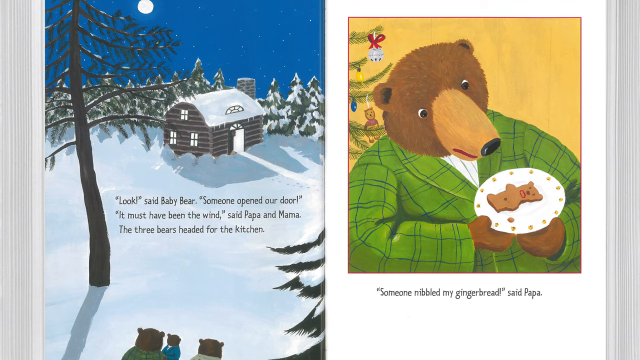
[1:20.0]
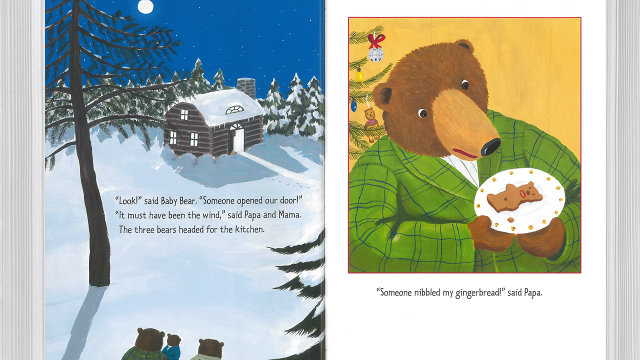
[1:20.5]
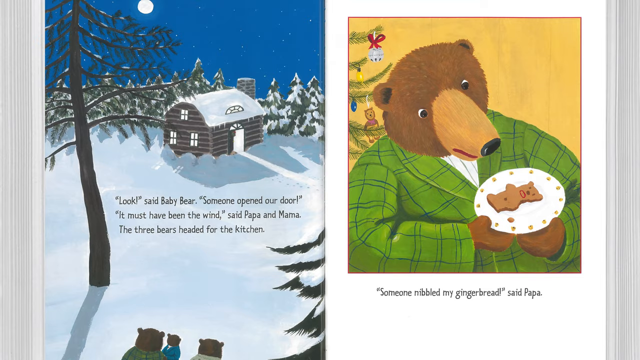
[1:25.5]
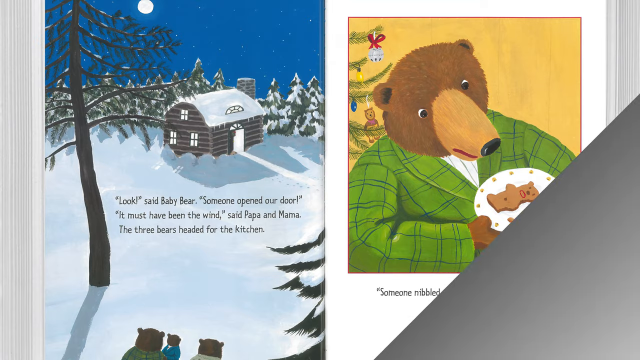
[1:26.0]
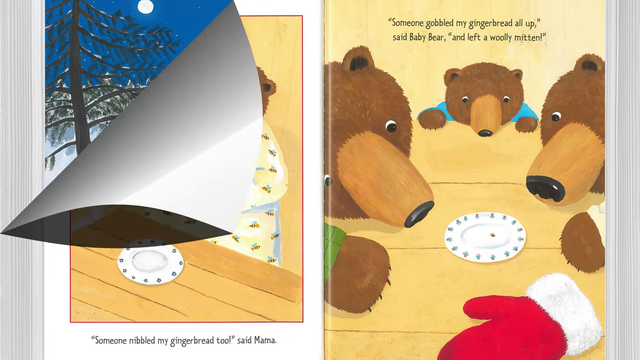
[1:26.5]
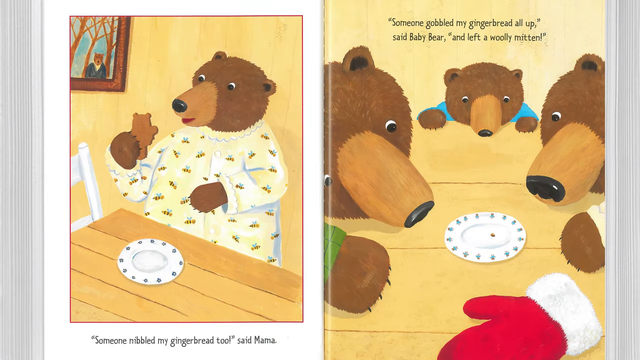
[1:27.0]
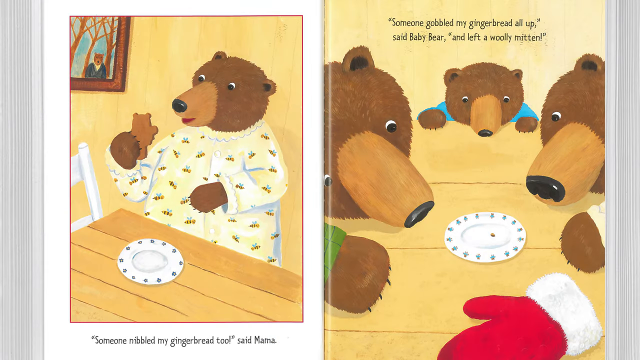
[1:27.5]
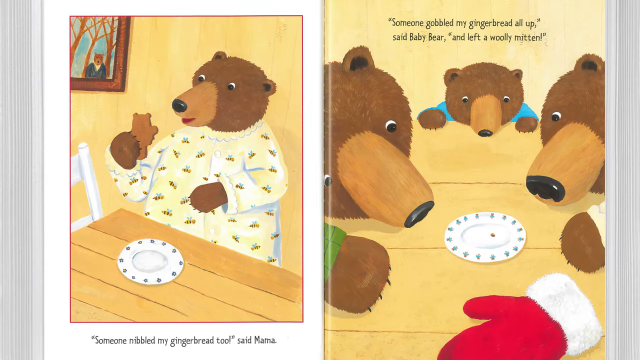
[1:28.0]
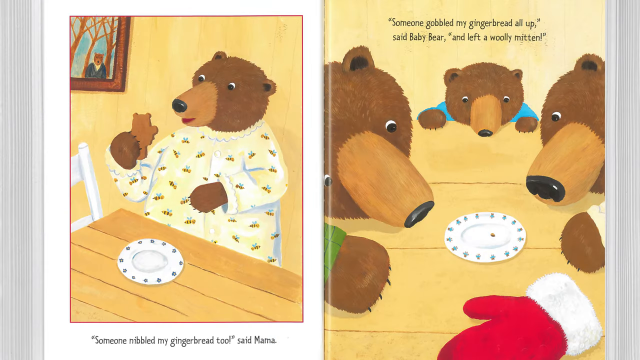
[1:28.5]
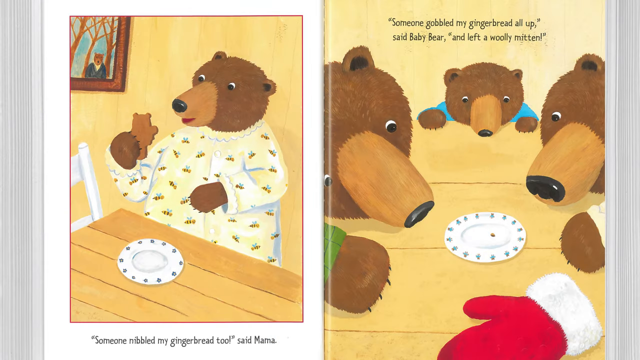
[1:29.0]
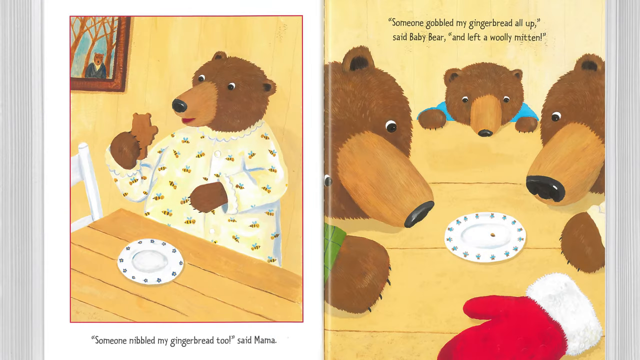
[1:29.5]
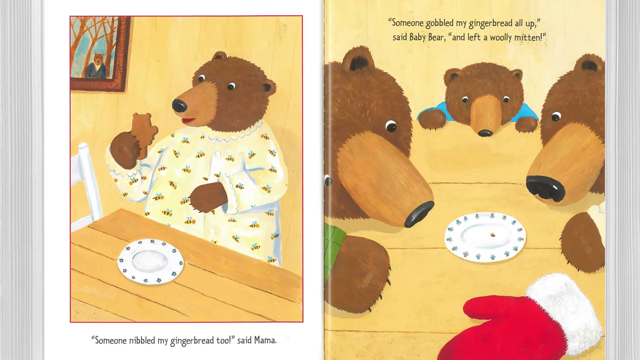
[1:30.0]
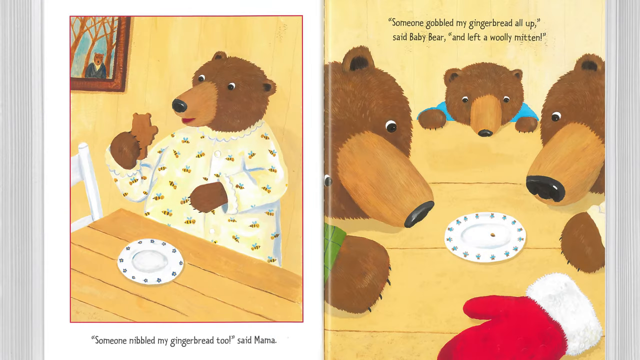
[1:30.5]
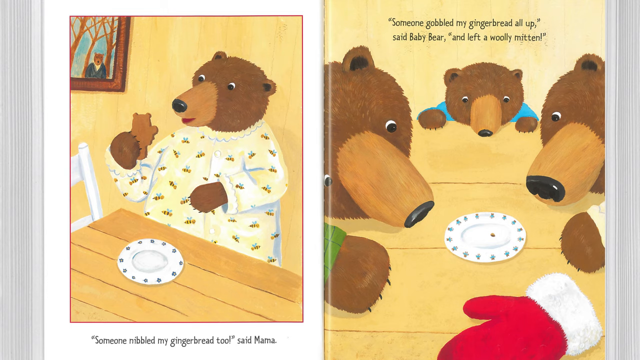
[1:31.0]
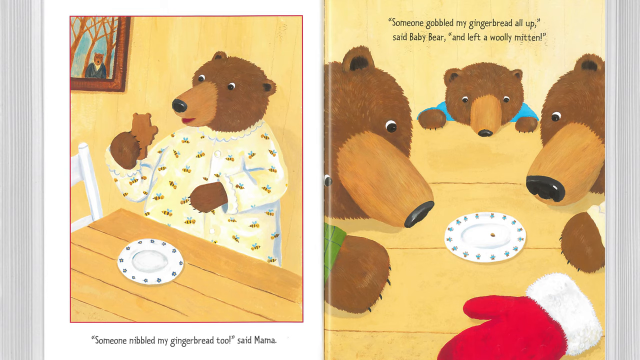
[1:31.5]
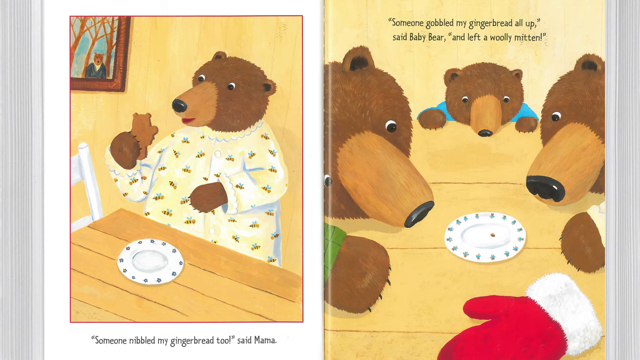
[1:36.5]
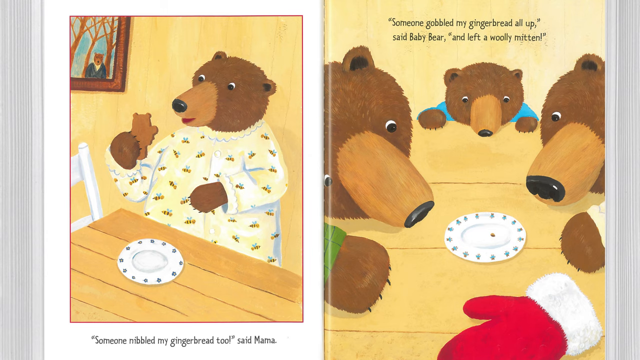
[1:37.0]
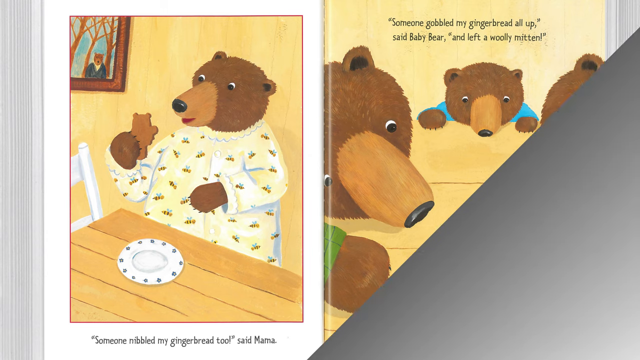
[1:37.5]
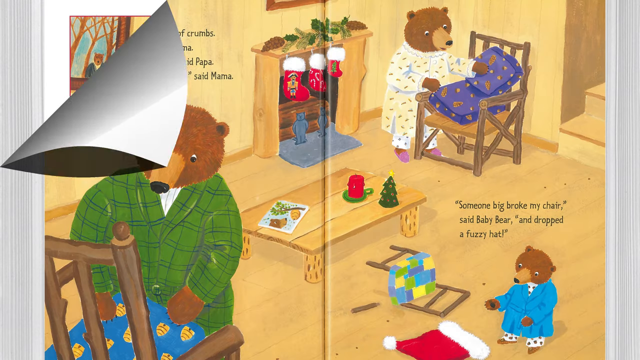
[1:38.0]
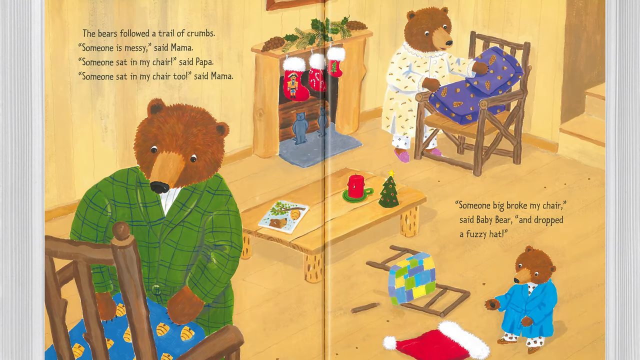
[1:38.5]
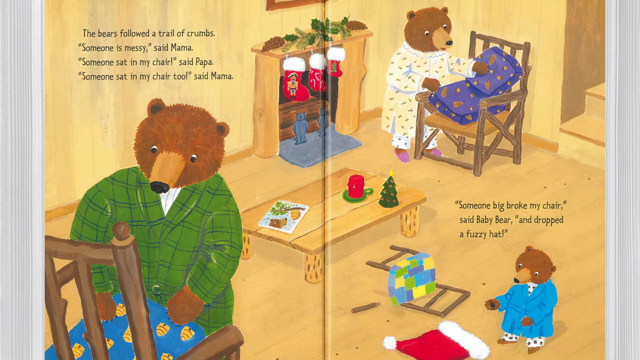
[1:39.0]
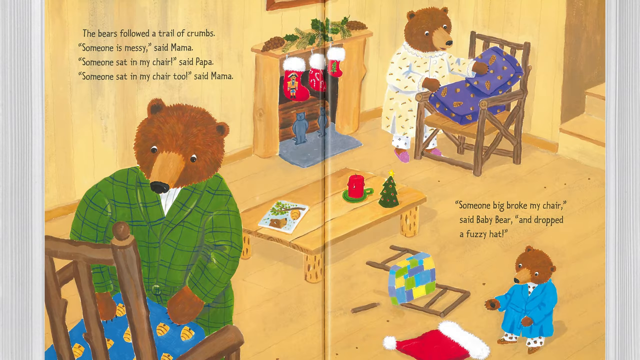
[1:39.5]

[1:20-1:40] On the next page Mama Bear stands by the kitchen table and picks up a piece of her gingerbread from the plate. "Someone nibbled my gingerbread too," says Mama. "Someone gobbled my gingerbread all up," says Baby Bear, "and left a wooly mitten." Baby Bear, Papa Bear and Mama Bear all look at an empty plate on the table, with a red mitten lying on the table, and they look very surprised. The bears follow a trail of crumbs. "Someone is messy," says Mama. "Someone sat on my chair," says Papa. "Someone sat in my chair too," says Mama. "Someone broke my chair," says Baby Bear, "and dropped a fuzzy hat." The living room is shown, with three little socks hung up at the fireplace. Papa Bear and Mama Bear both check their chairs, and the cushions look very messed up. Baby Bear's chair is completely broken; it has fallen on the ground with a leg lying nearby. A Santa hat is noticeably on the floor.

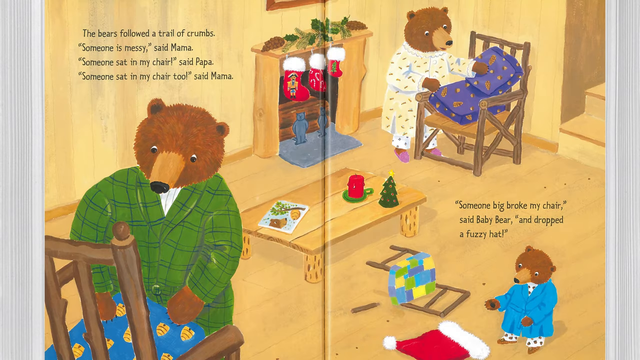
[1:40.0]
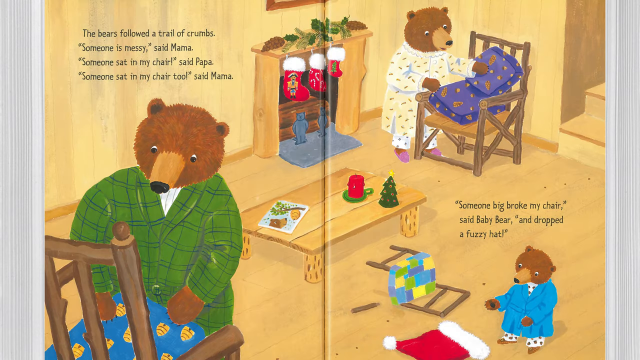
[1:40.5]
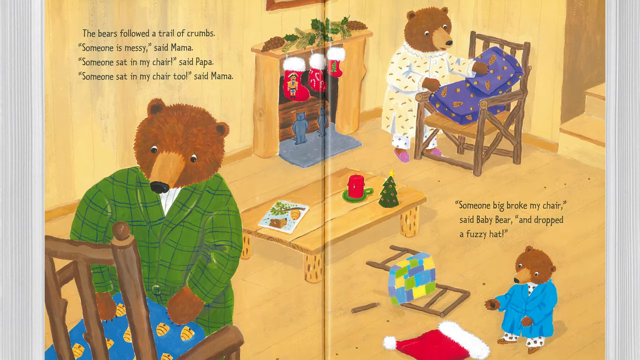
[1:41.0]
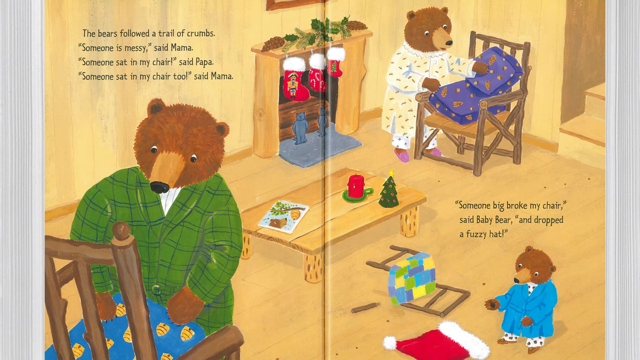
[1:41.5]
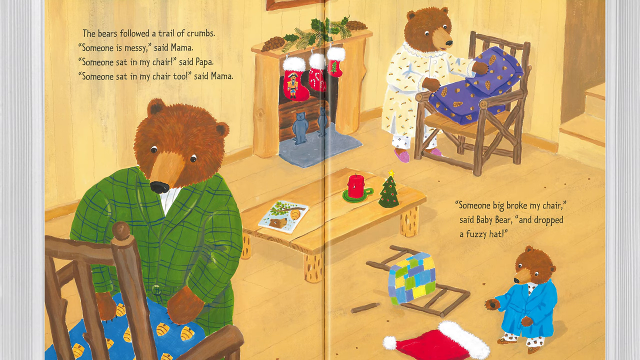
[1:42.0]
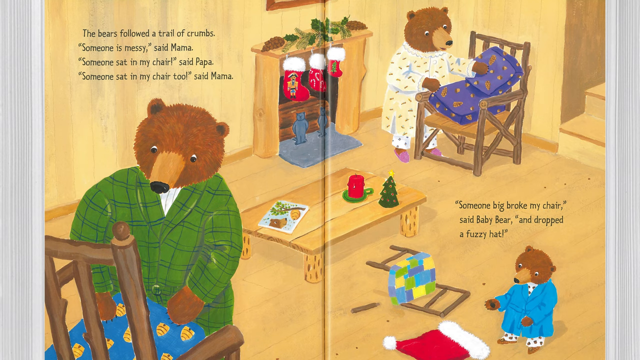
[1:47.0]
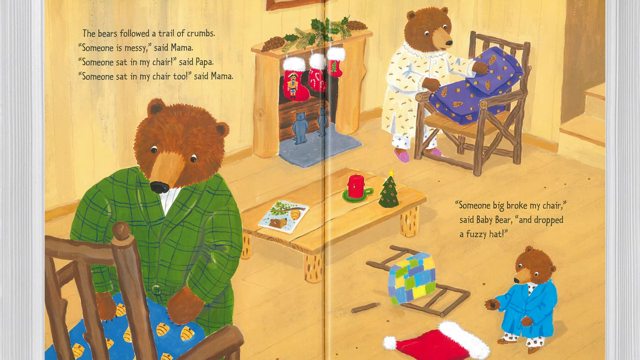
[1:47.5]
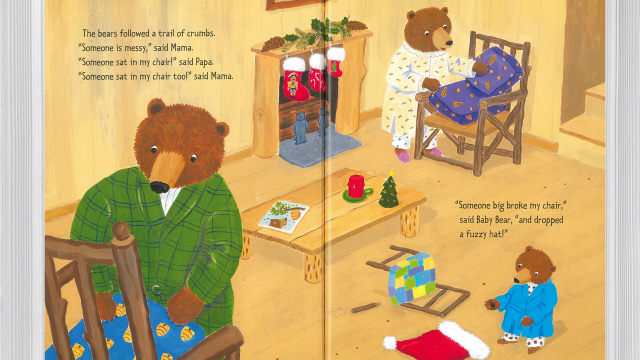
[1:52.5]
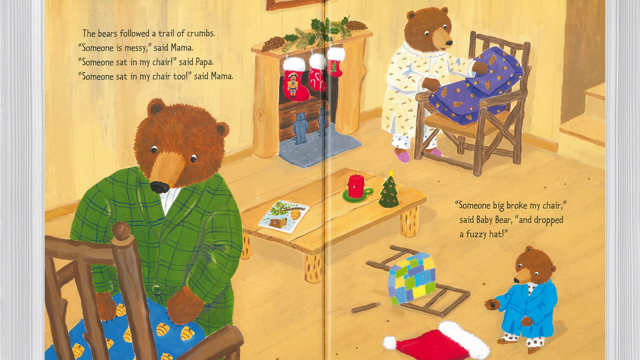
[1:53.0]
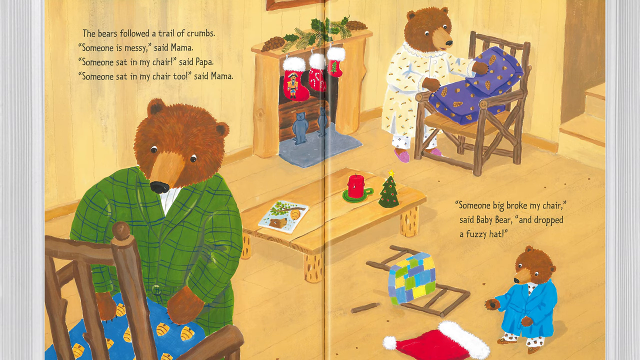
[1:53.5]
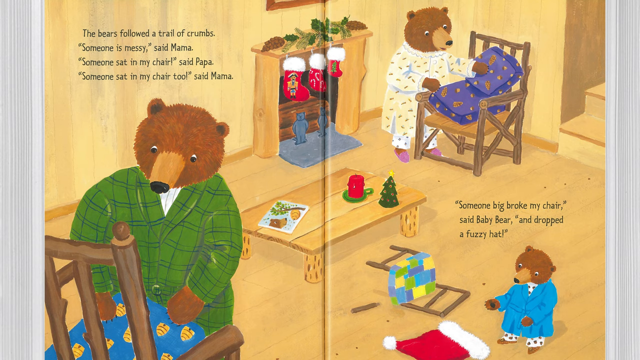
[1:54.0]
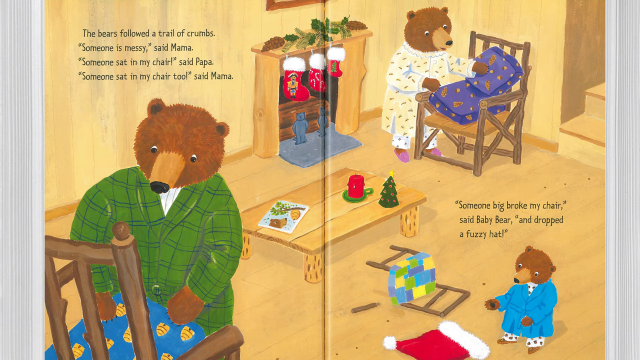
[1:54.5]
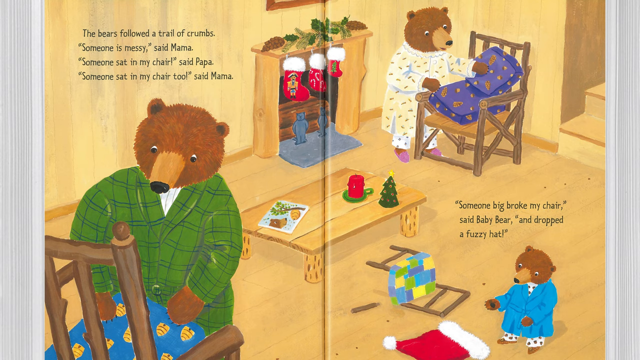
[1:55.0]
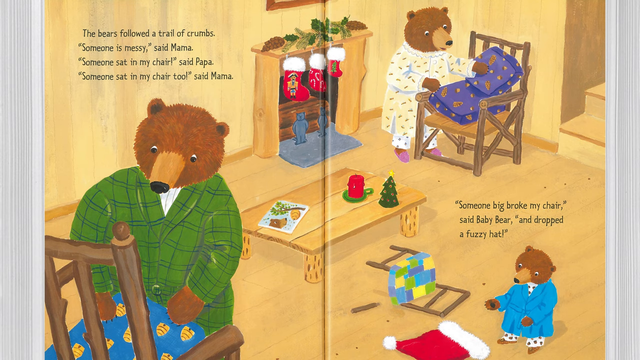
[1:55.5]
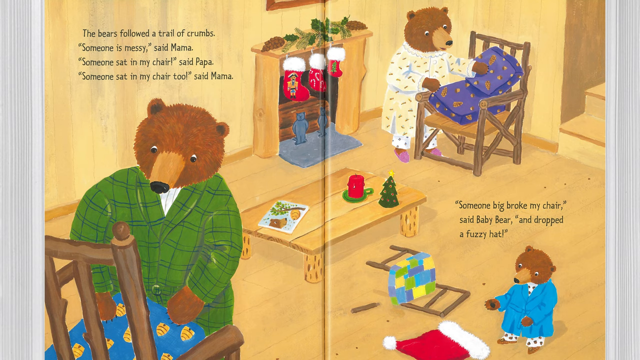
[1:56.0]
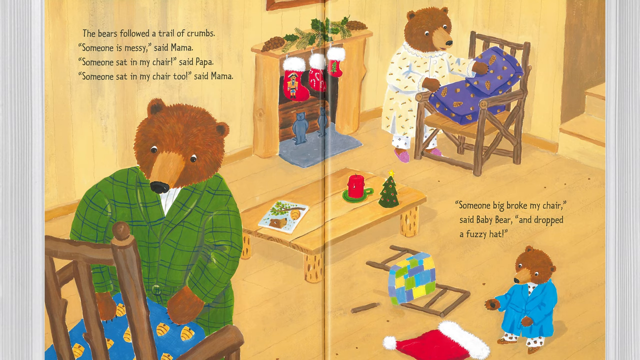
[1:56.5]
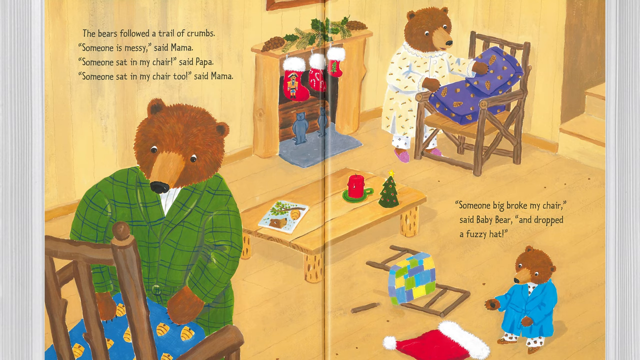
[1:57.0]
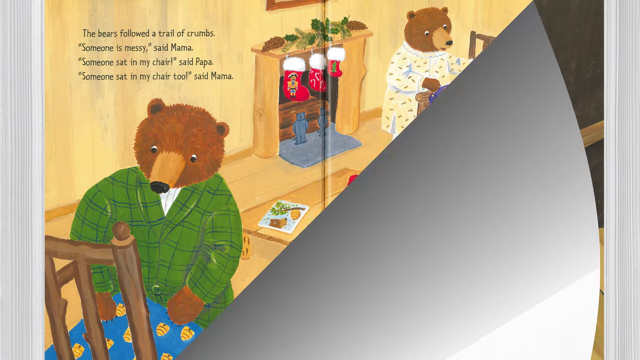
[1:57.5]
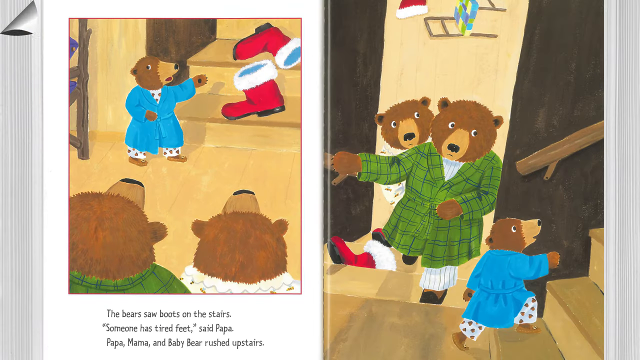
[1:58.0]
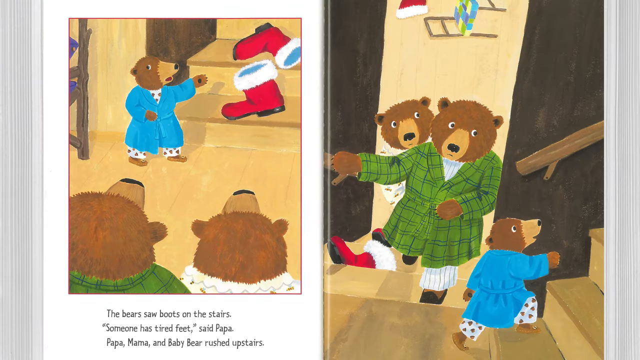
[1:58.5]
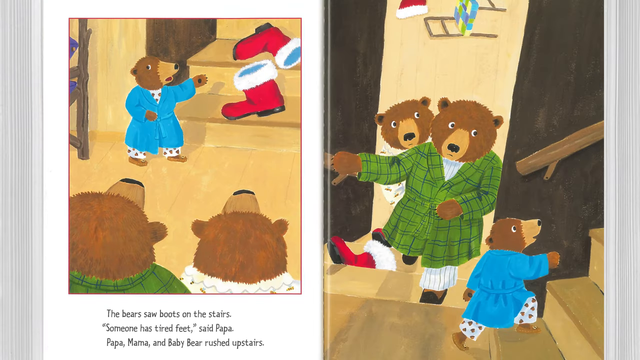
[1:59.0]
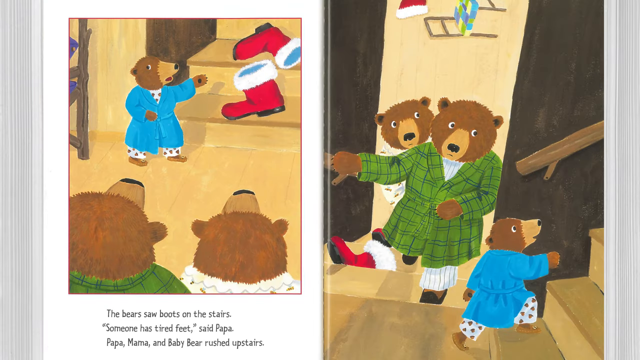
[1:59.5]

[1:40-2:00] The bear family is seen searching around the house, finding messes left around and their chairs broken. On the next page the bears see boots on the stairs. "Someone has tired feet," says Papa. Papa, Mama and Baby Bear rush upstairs, looking shocked. In the picture, Papa Bear and Mama Bear stand next to each other looking at Baby Bear, who is pointing at a pair of red boots left messily on the stairs. In the next picture, Papa and Mama Bear are walking upstairs, all looking rather scared, surprised and shocked, with Baby Bear leading the way. Baby Bear's fallen chair and a Santa hat are in the background.